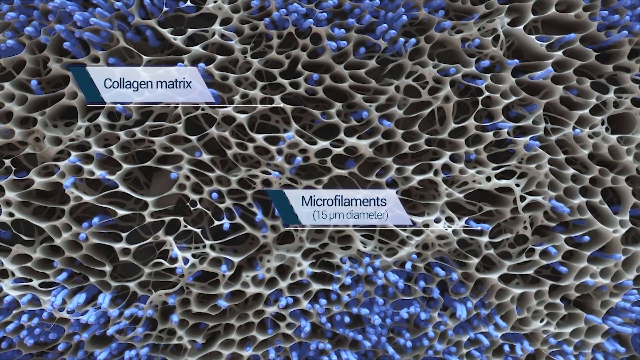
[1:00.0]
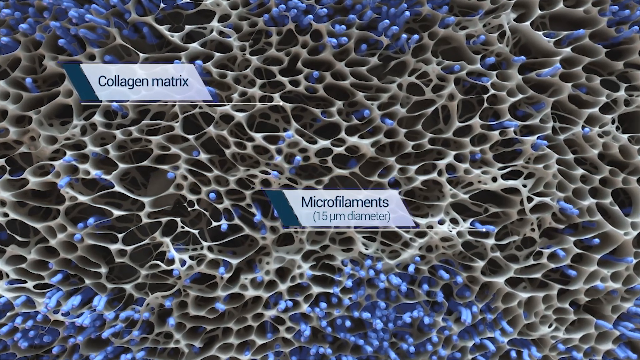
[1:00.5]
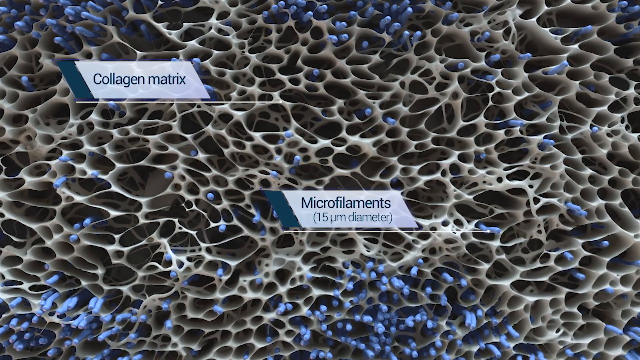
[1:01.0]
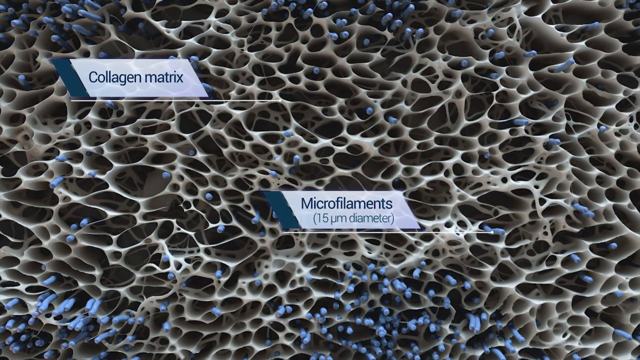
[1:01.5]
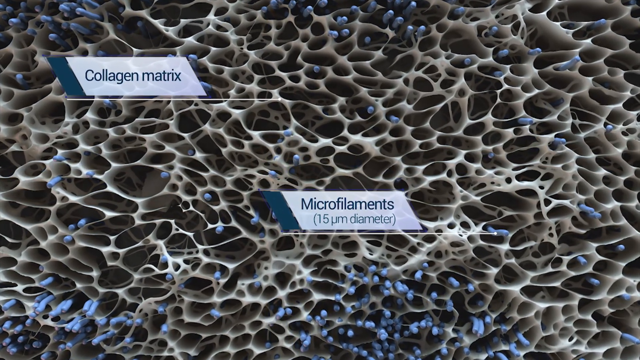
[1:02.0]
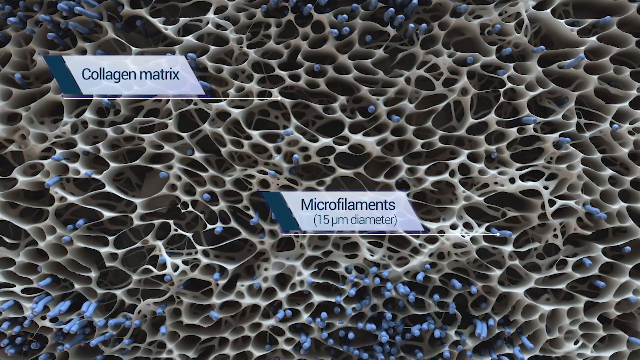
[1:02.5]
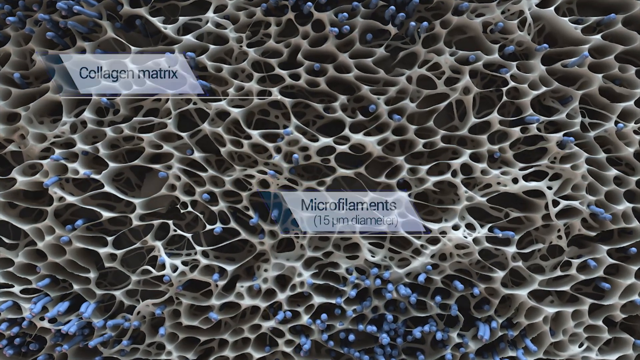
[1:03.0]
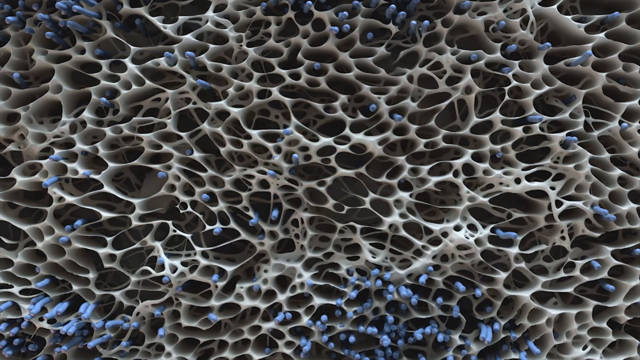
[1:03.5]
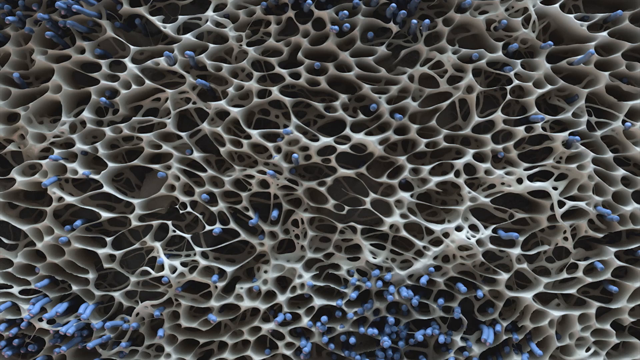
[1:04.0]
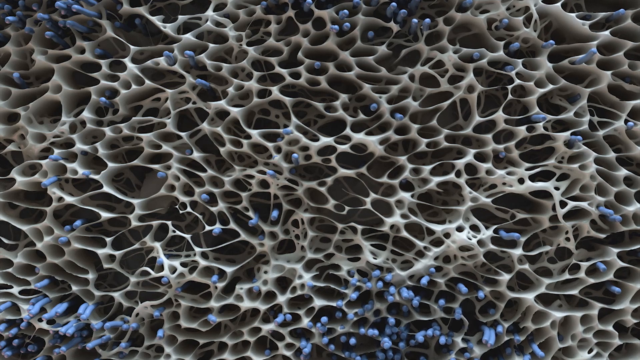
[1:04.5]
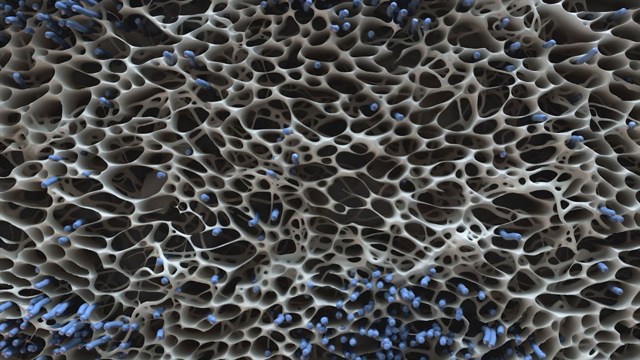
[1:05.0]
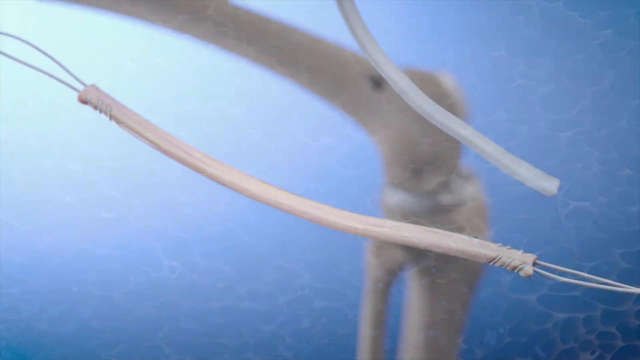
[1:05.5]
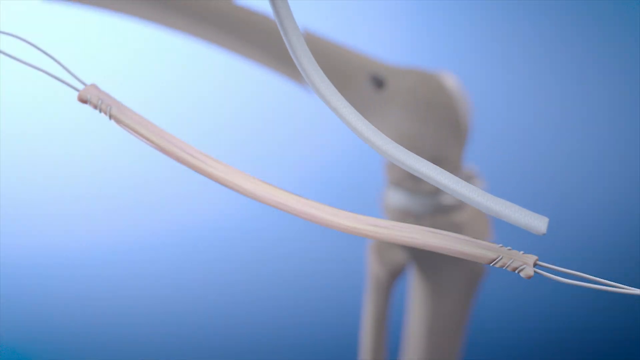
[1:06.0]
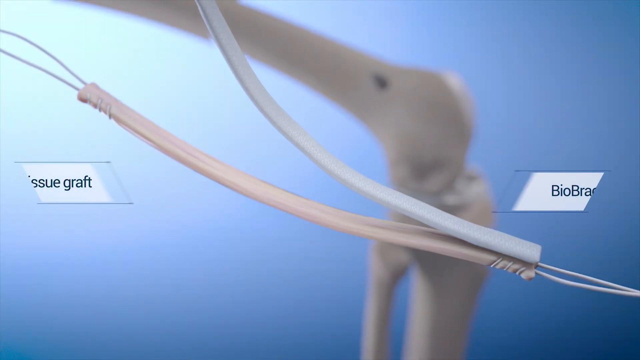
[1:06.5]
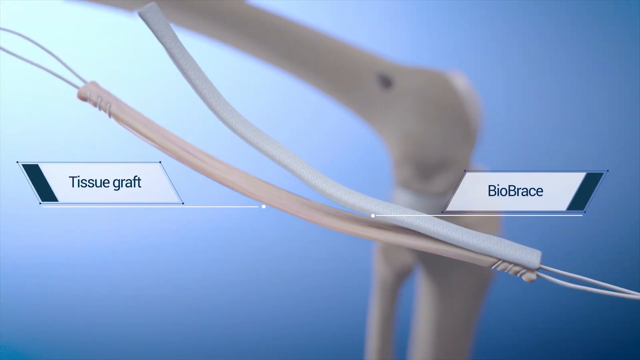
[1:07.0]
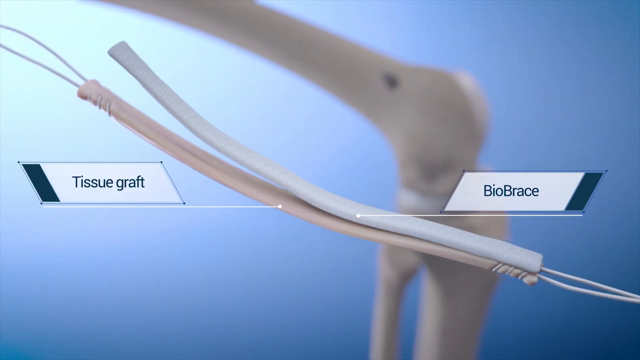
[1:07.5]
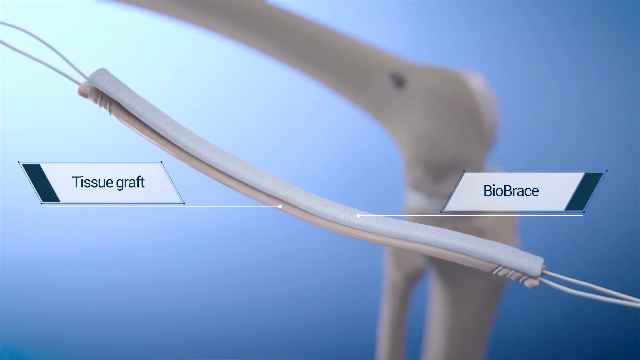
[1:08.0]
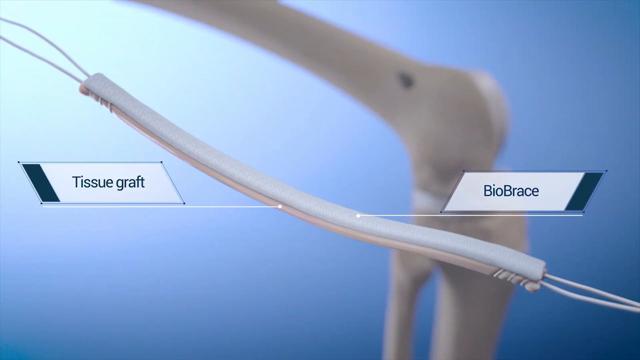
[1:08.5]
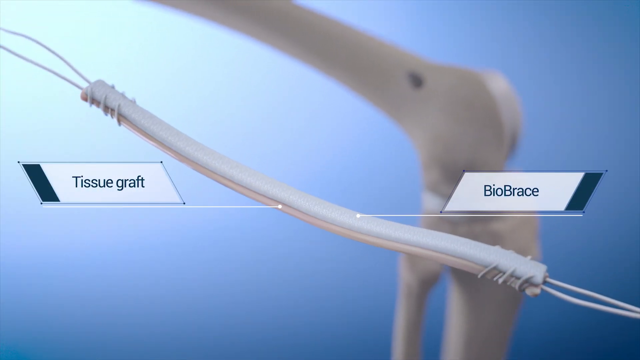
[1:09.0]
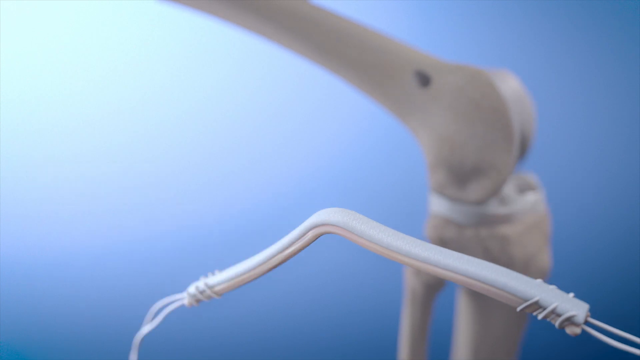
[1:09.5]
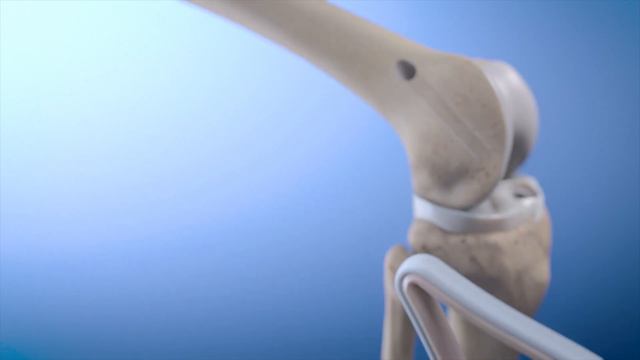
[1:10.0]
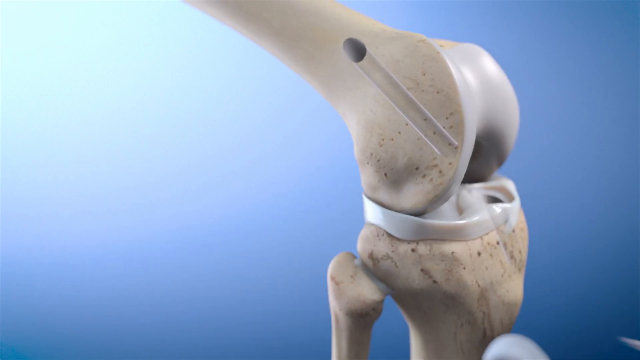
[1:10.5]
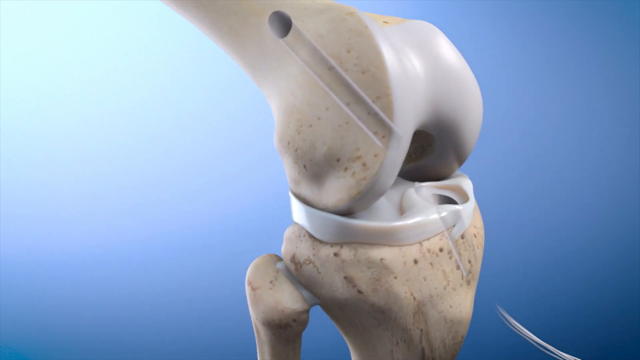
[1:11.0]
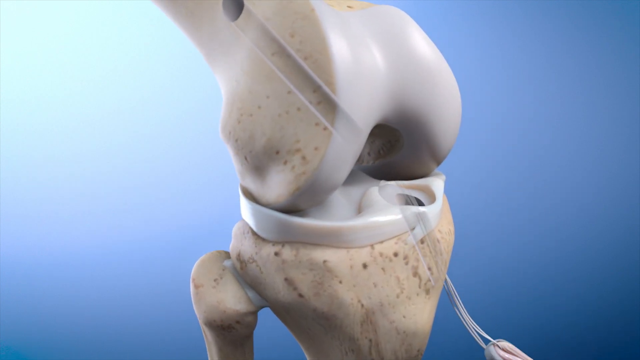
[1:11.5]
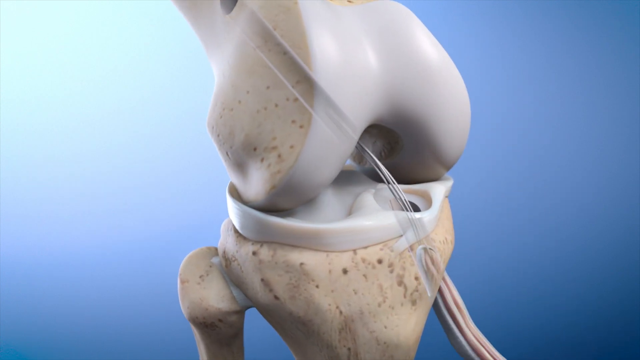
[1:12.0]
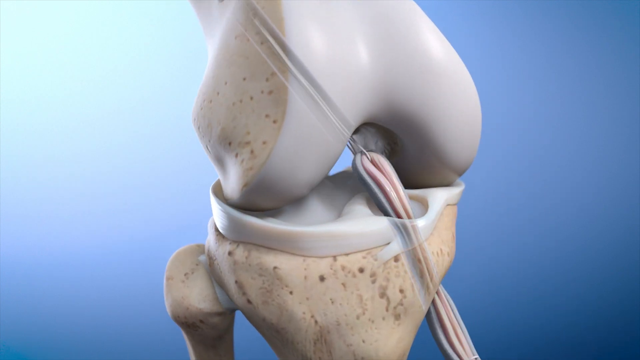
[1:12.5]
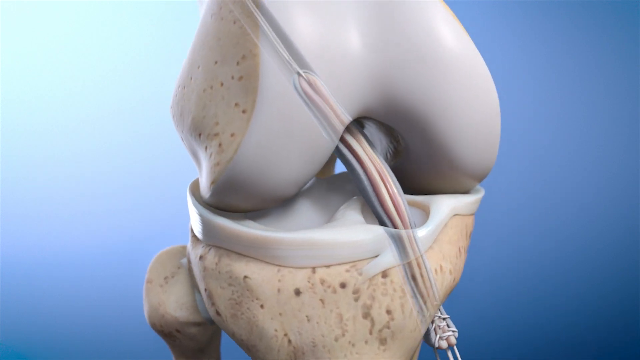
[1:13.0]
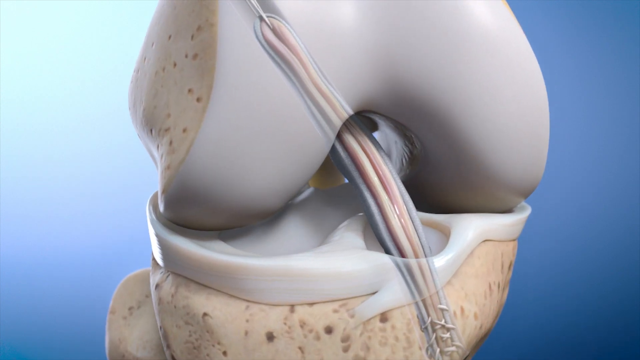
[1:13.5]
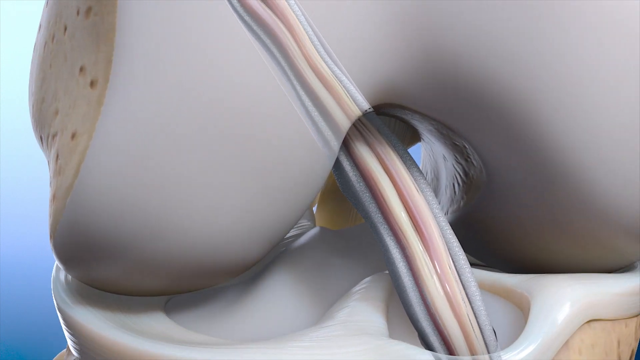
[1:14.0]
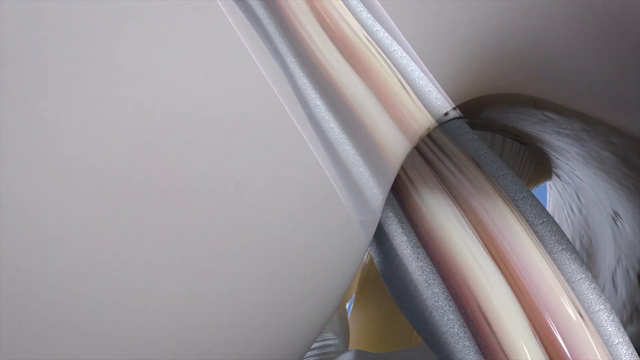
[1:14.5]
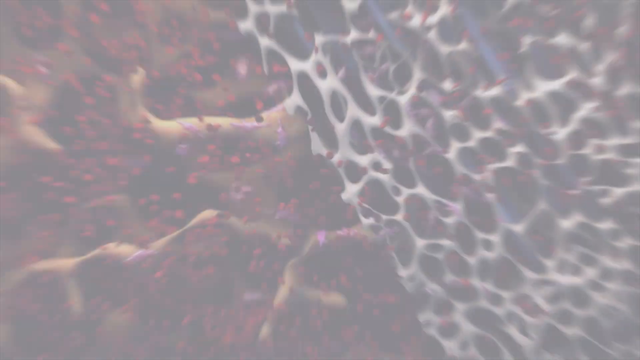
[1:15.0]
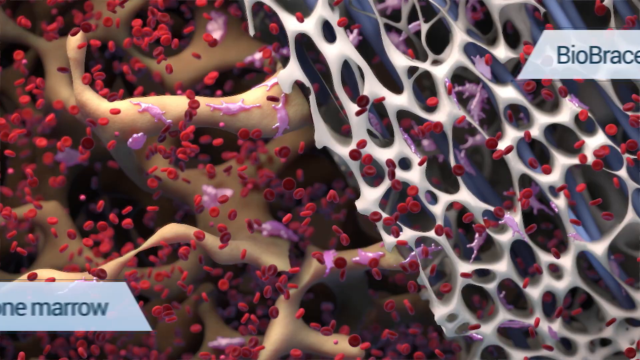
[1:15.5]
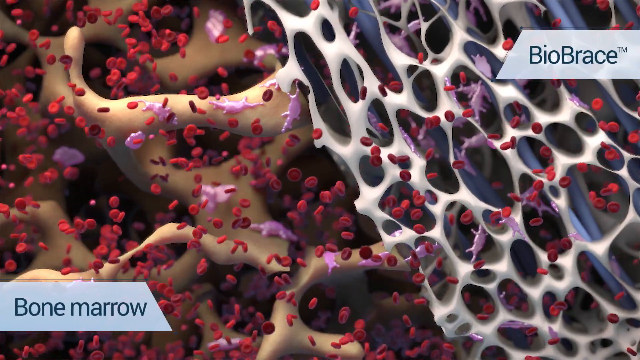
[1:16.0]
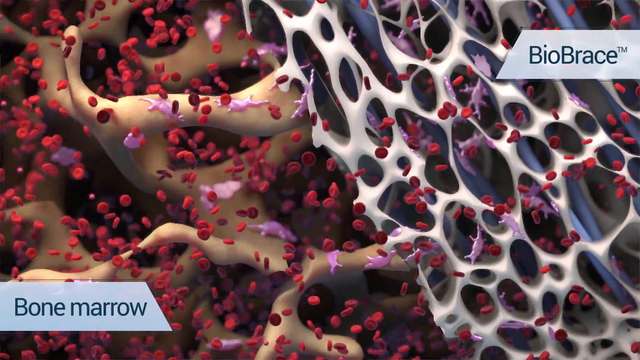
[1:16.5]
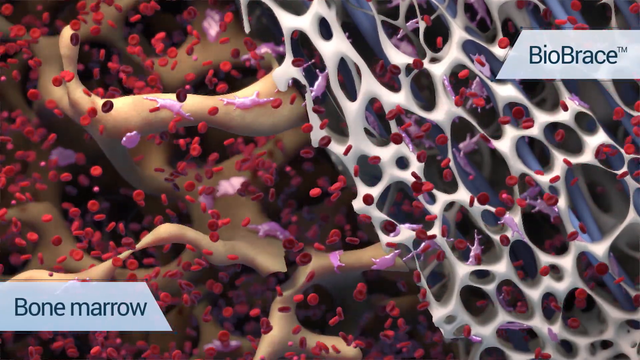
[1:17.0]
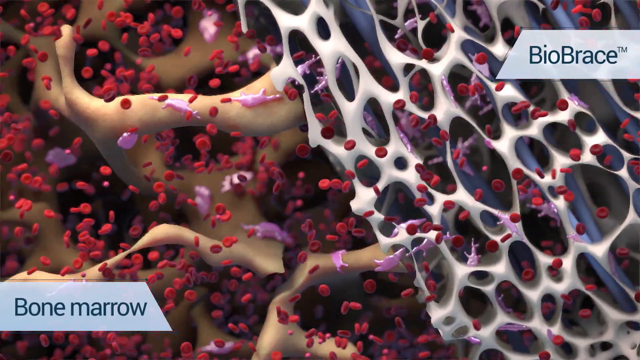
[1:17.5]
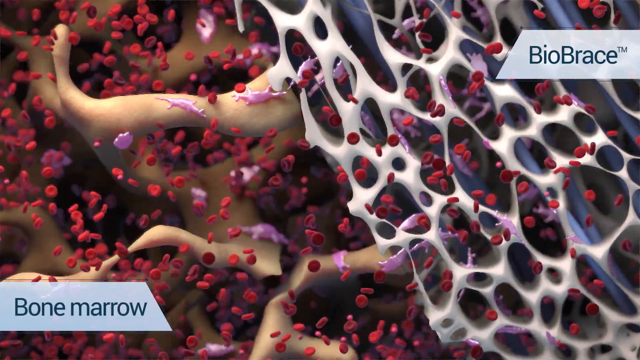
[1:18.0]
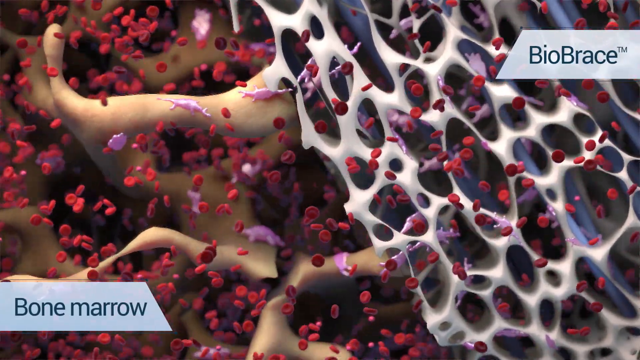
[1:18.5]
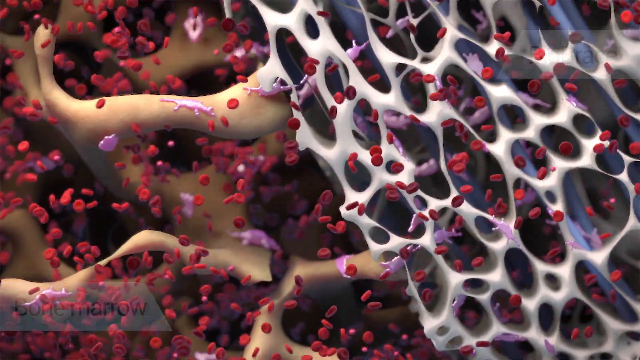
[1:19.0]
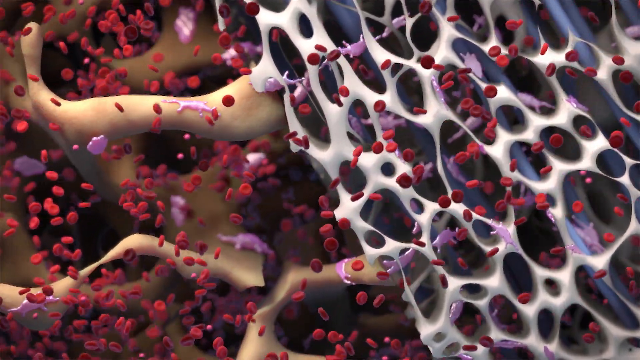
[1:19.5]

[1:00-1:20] The camera keeps zooming in slowly, and then the screen switches to another scene with a blue background showing the tube again, with what looks like another tube coming down on top of it and an out-of-focus bone in the background. The original tube is labeled "tissue graft" and the new tube is labeled "biobrace". The two tubes fold in on each other and disappear on the right-hand side, and the bone starts rotating. In a close-up, the tubes are inserted into a hole in the bone. The camera then zooms far in on an animation, apparently one shown earlier, labeled "bone marrow" on the left and "biobrace" on the right. Both objects have holes, like matrices, and many little red and purple things travel around through the matrices of both. The object on the right is white and the one on the left is yellowish.